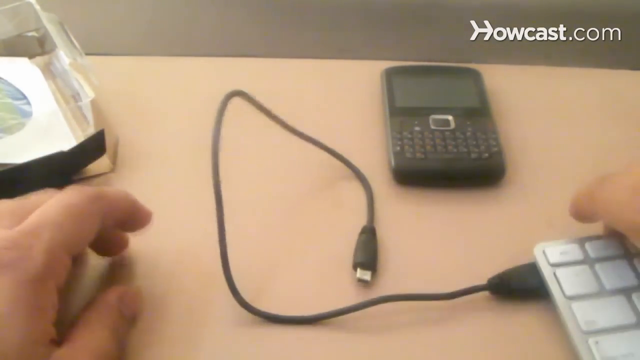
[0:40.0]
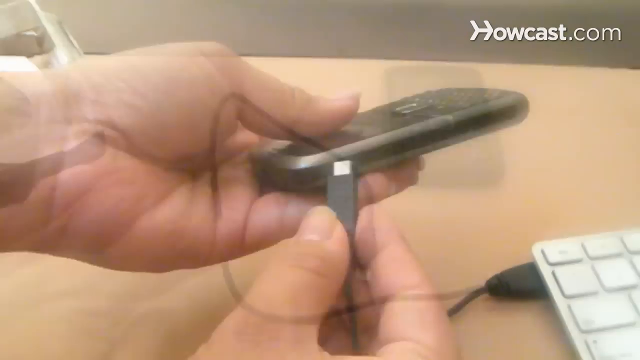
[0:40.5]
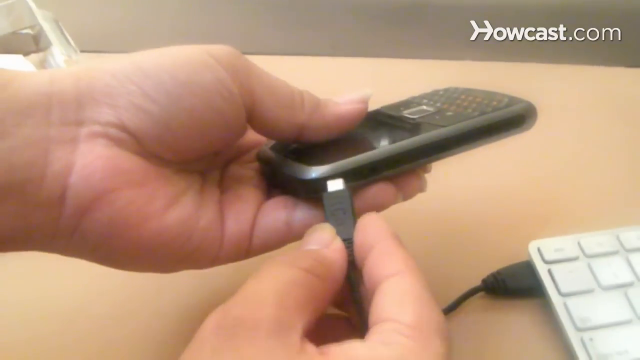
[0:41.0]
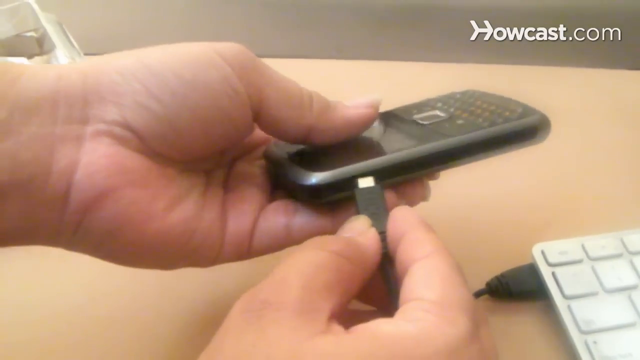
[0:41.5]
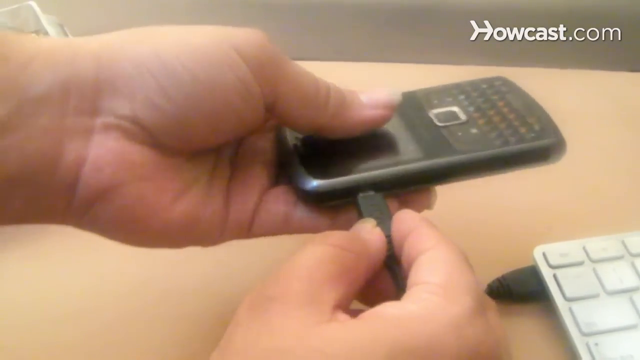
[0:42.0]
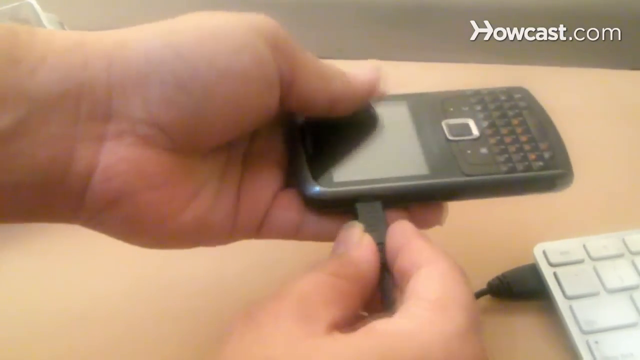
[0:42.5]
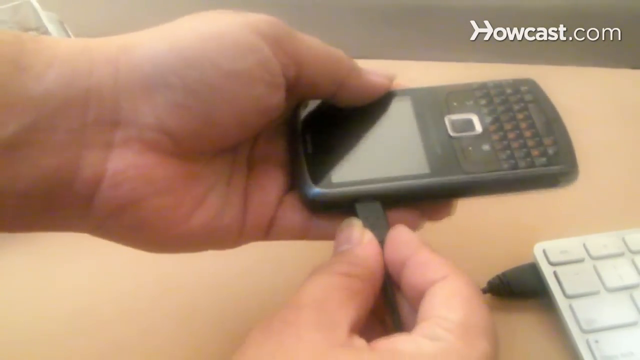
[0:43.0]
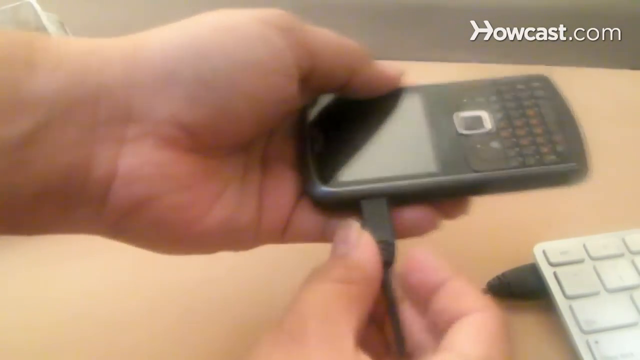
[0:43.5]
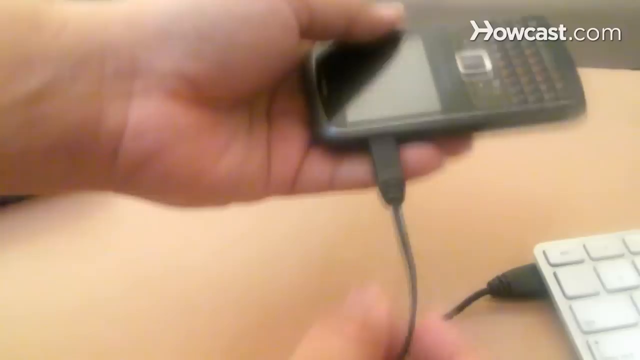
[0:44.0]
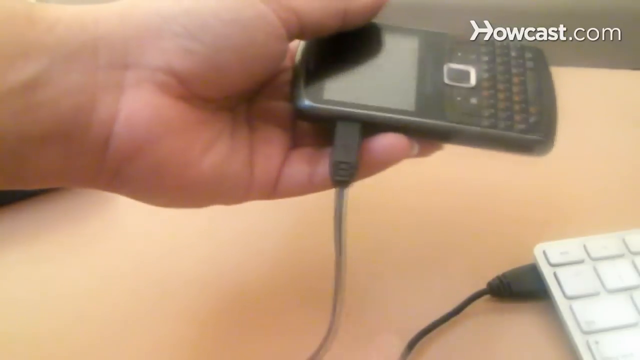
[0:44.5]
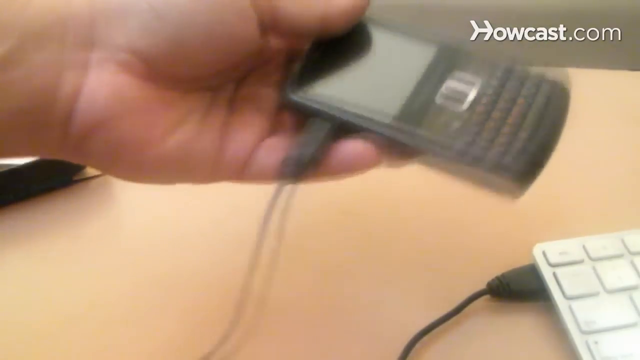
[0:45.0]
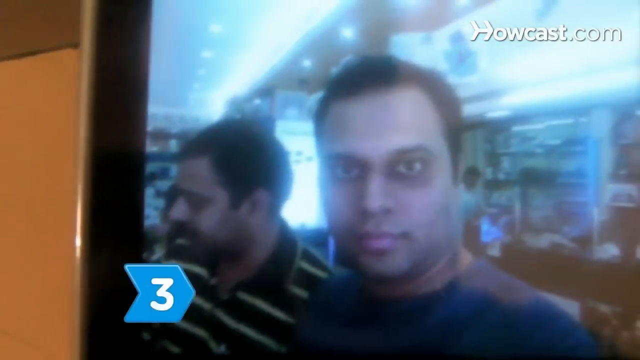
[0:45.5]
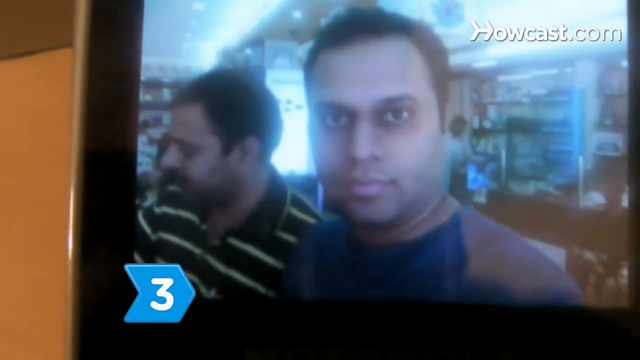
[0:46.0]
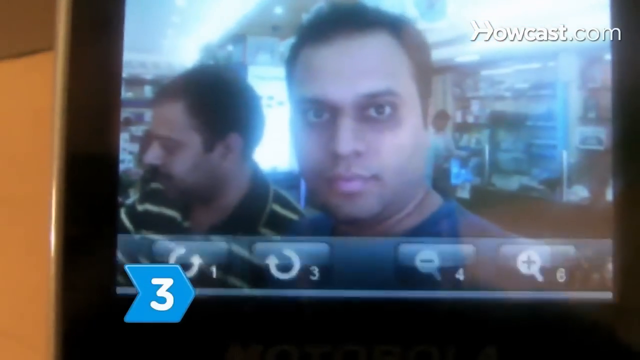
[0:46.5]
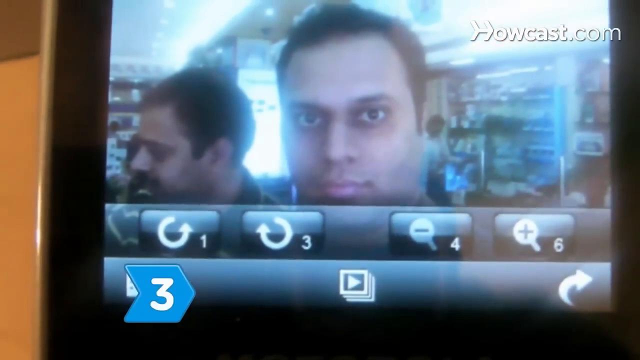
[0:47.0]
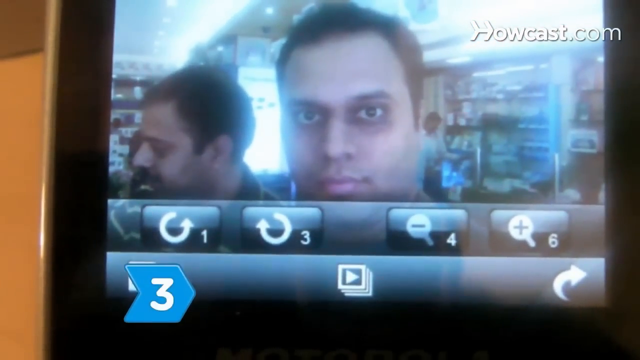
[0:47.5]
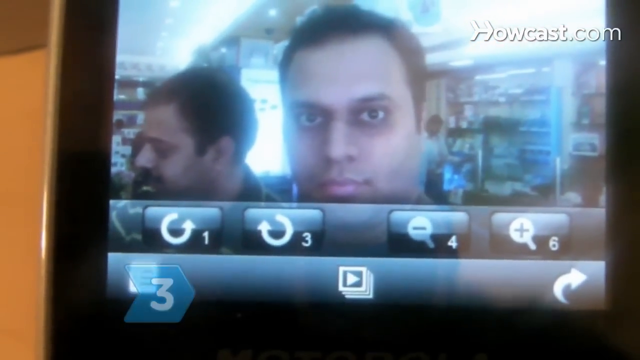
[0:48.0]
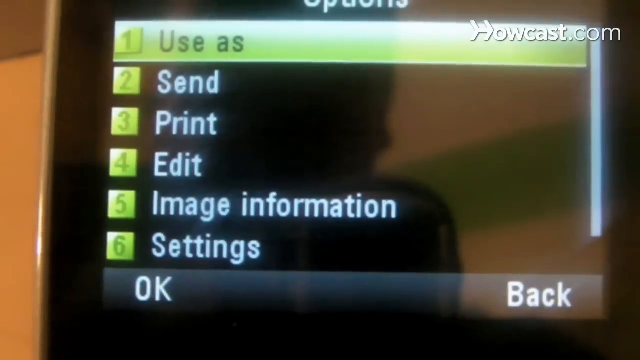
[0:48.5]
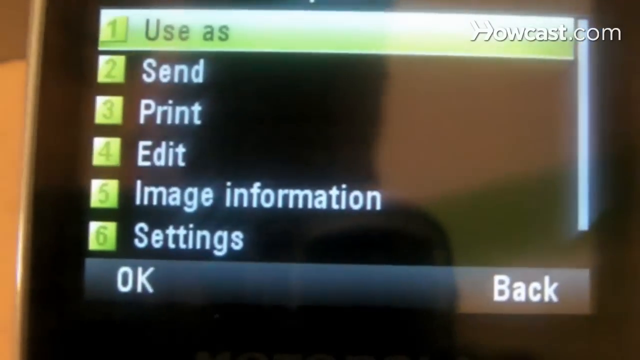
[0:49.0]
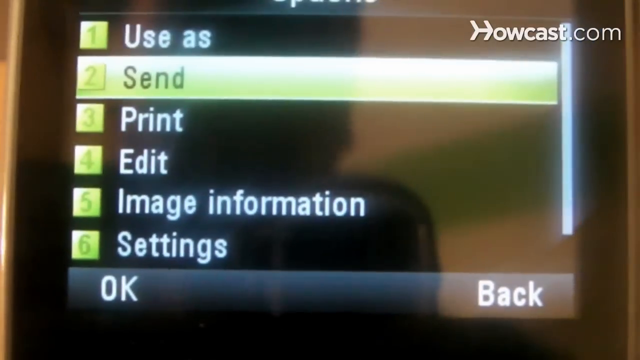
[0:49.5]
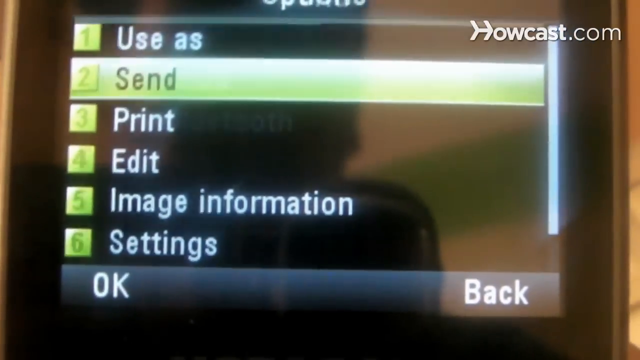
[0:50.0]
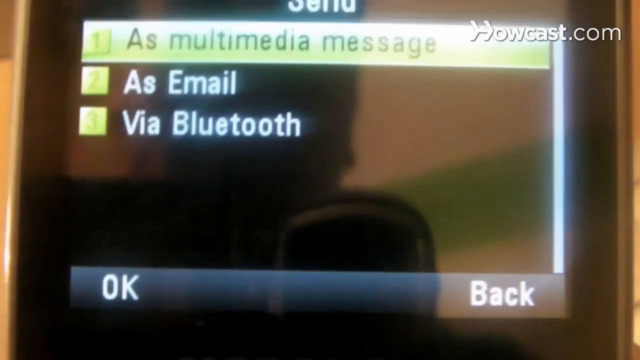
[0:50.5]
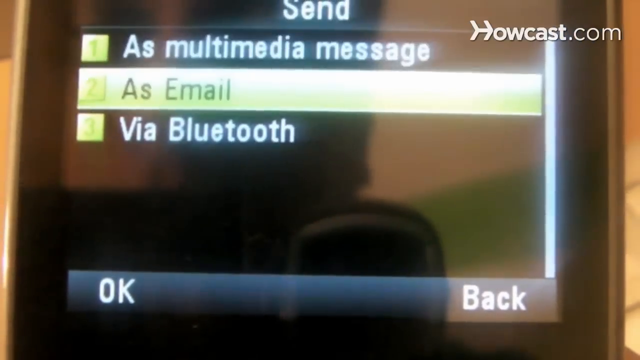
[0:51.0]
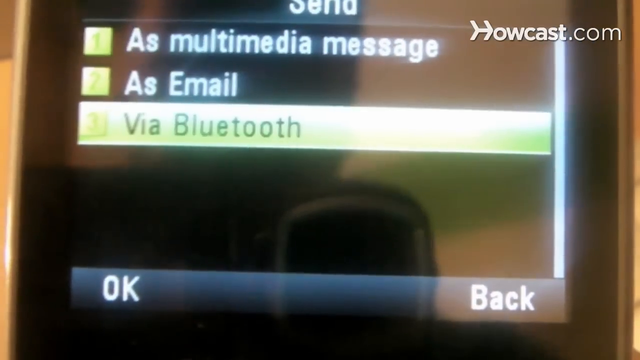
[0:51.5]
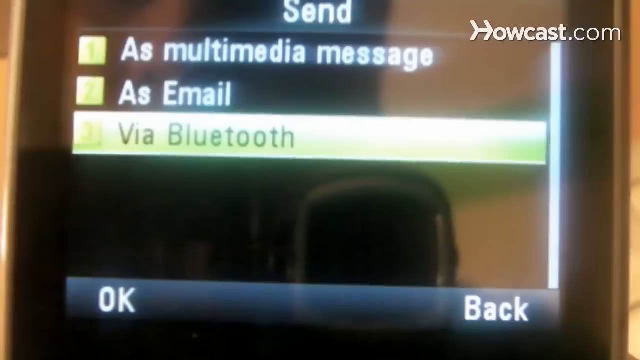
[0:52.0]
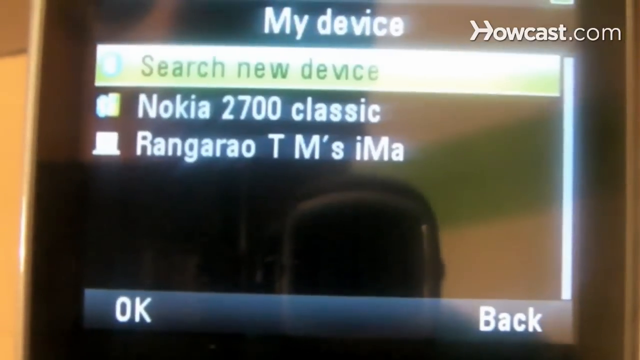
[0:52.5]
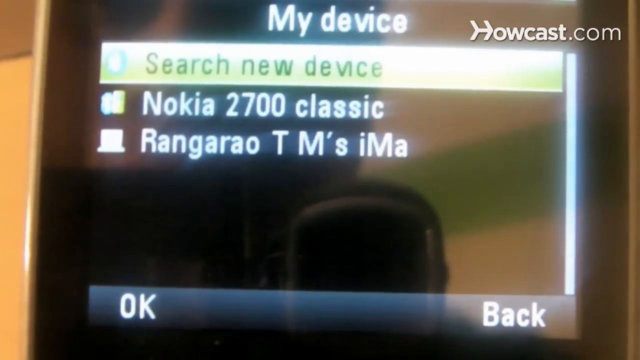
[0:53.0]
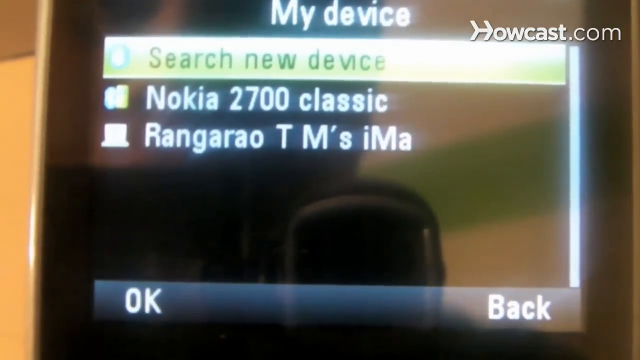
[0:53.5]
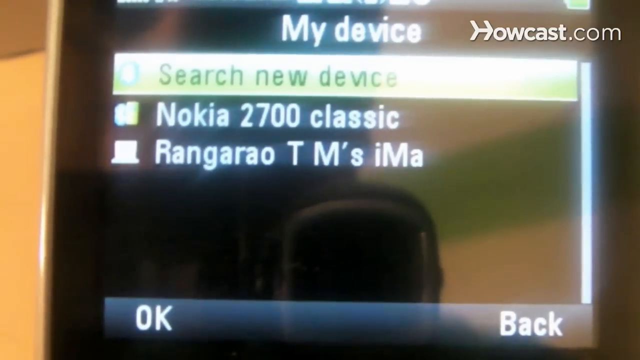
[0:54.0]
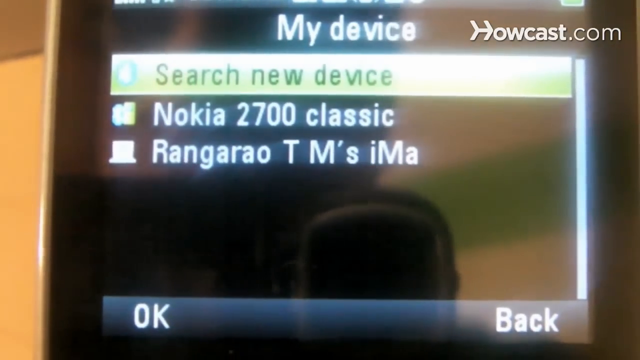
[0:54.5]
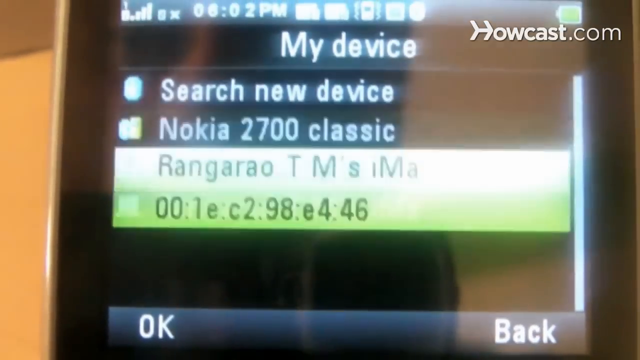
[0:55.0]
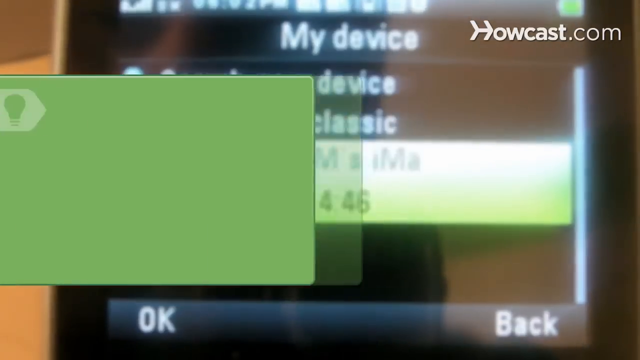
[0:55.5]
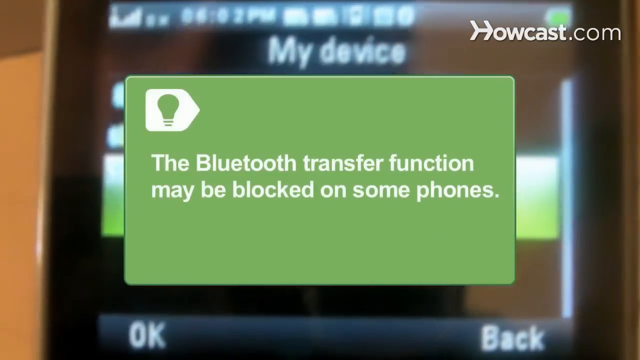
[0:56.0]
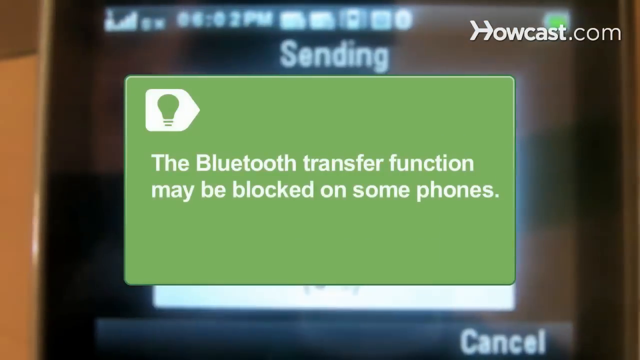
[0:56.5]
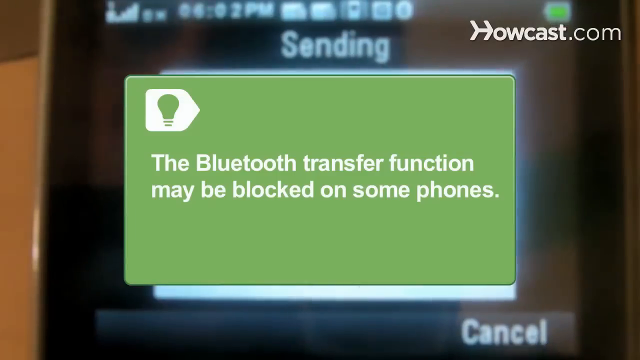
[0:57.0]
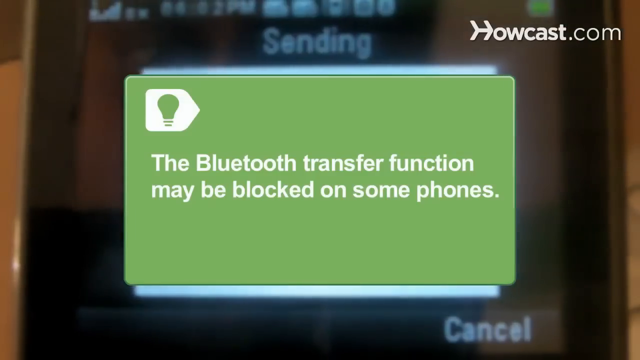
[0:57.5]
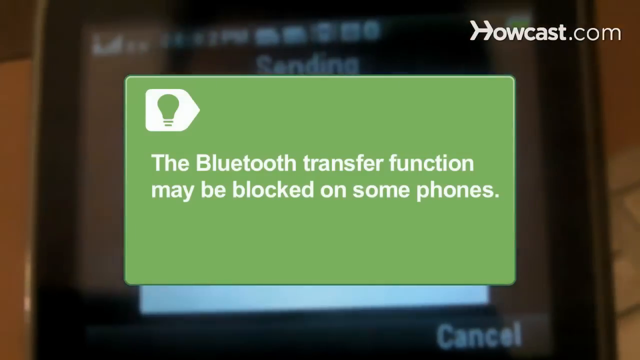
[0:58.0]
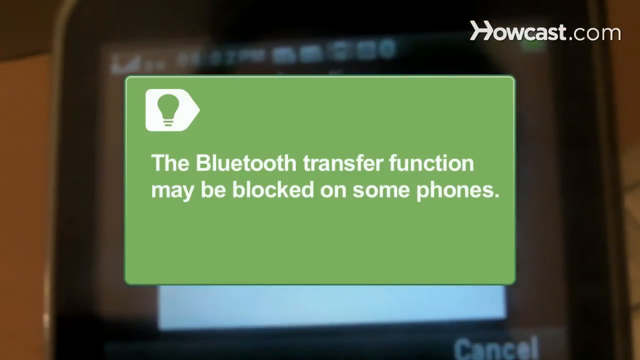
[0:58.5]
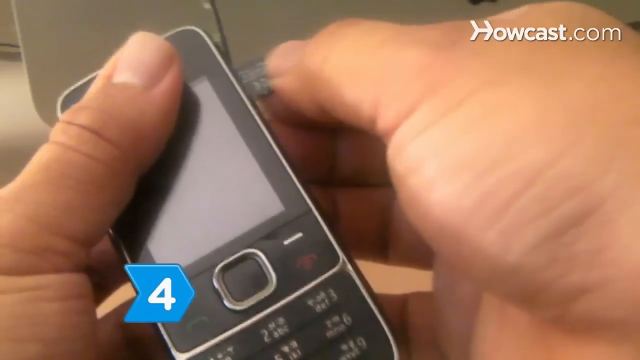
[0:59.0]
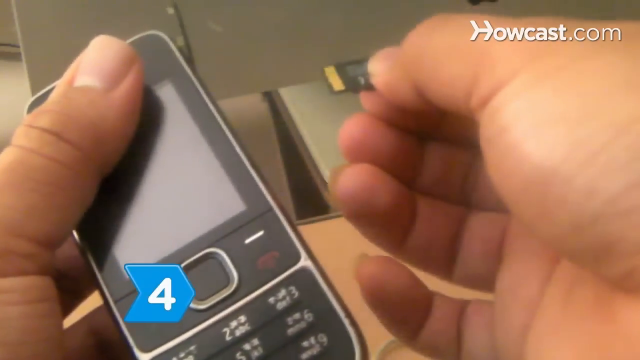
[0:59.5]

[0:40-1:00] The user connects the other end of the cable, already attached to the PC, into the phone through the port on its side made for this kind of adapter. The user then opens one of the photos on the phone, goes into the options, selects send, chooses via Bluetooth, and looks for the option for the PC the photo is to be sent to. A message appears on a green card, a kind of warning, saying that the Bluetooth transfer function may be blocked on some phones. A phone with its data card taken out is then shown.